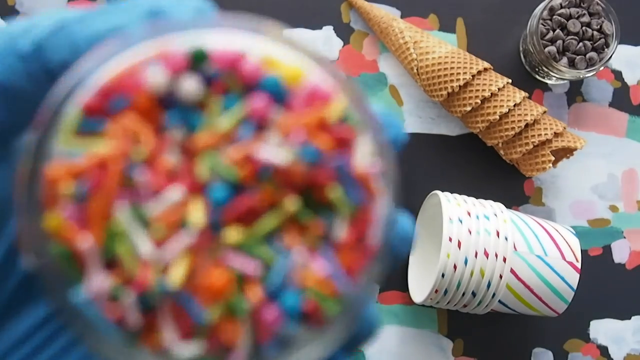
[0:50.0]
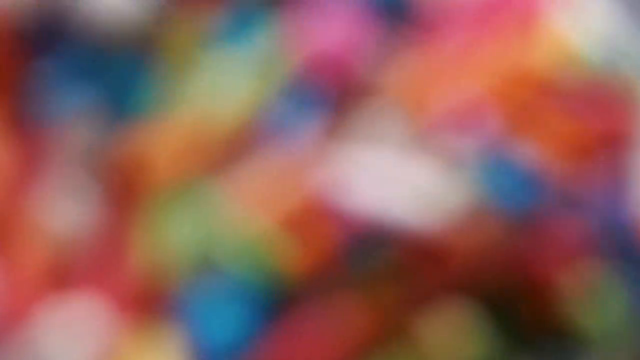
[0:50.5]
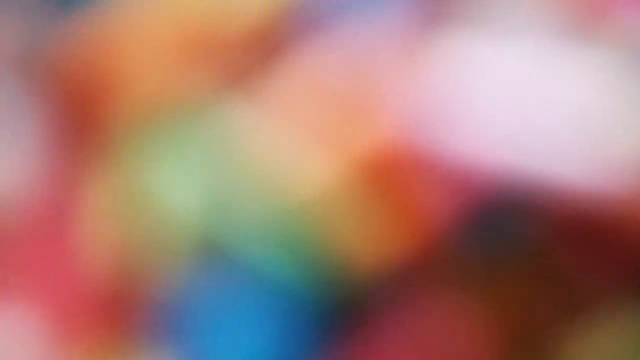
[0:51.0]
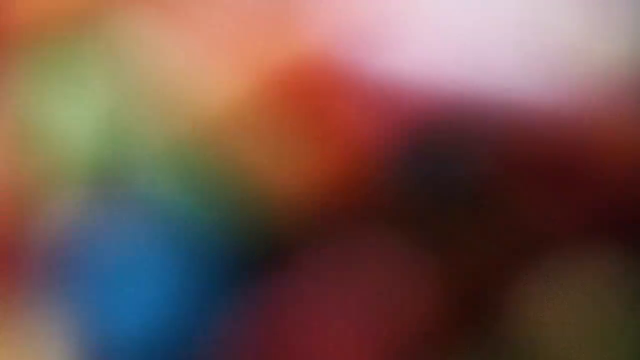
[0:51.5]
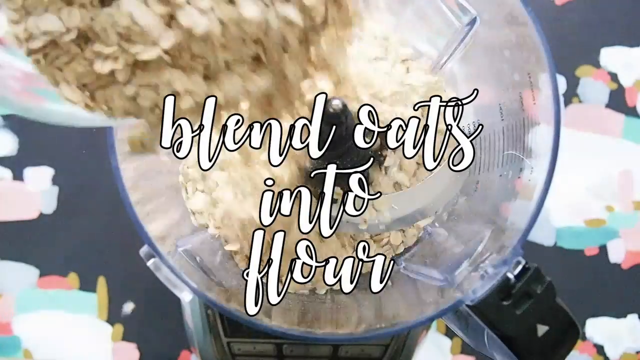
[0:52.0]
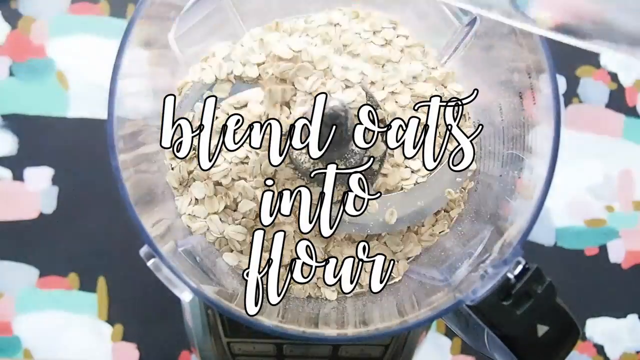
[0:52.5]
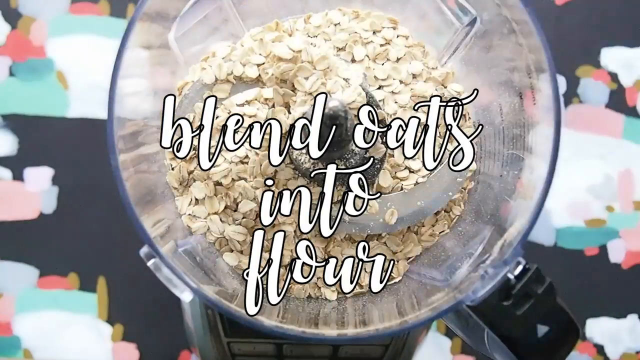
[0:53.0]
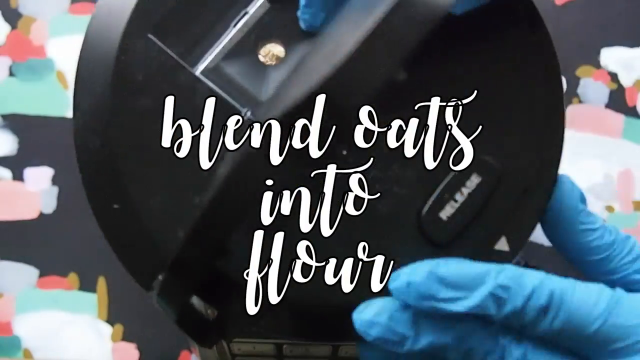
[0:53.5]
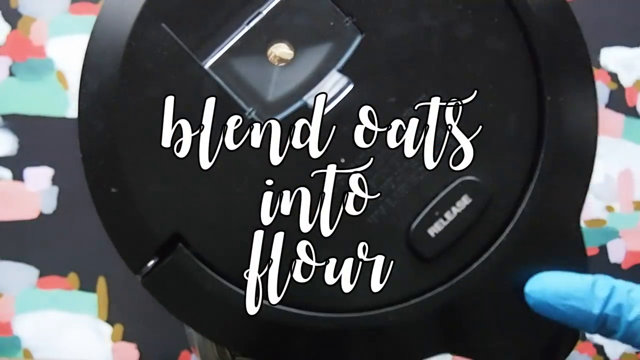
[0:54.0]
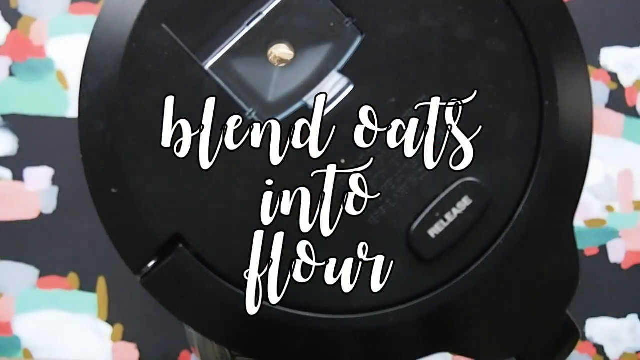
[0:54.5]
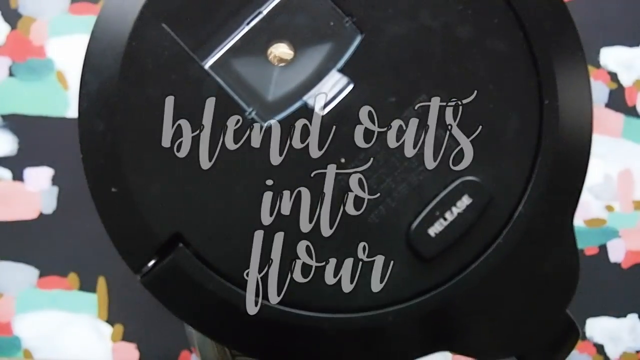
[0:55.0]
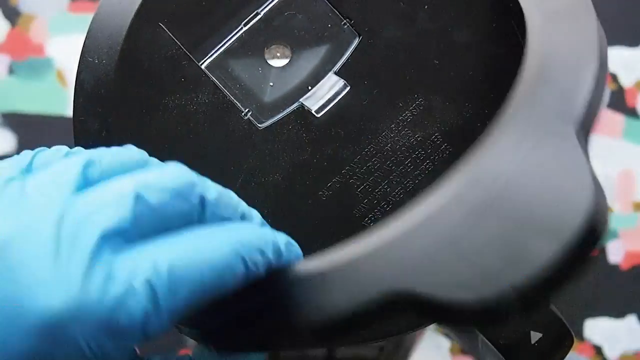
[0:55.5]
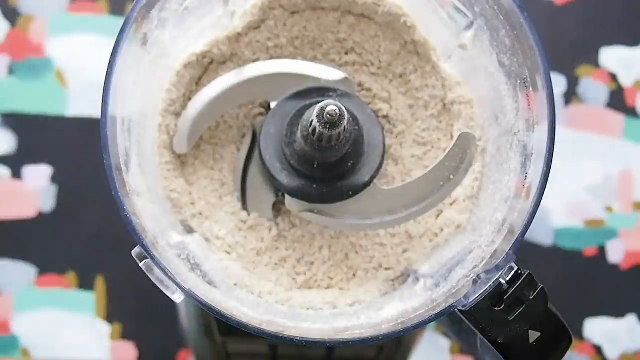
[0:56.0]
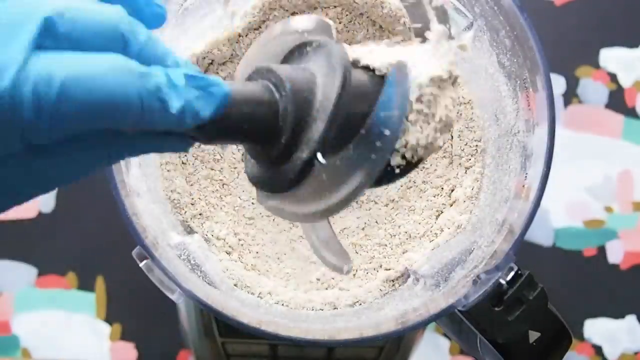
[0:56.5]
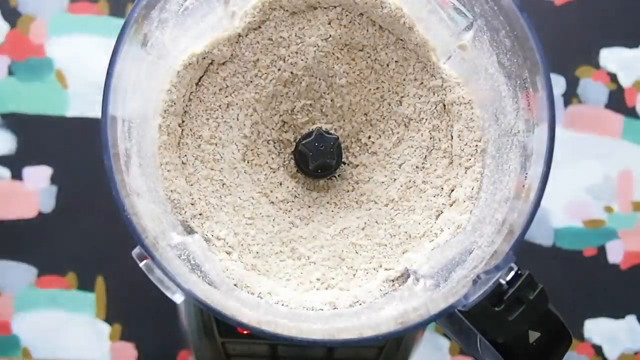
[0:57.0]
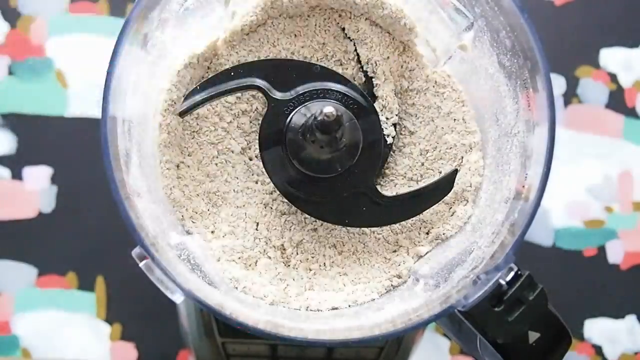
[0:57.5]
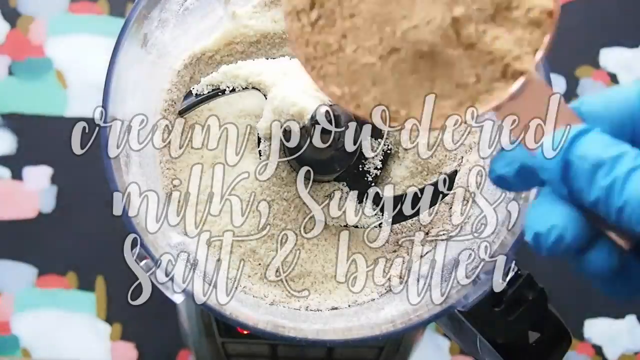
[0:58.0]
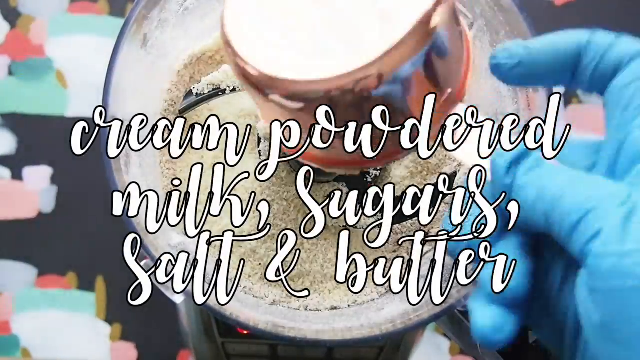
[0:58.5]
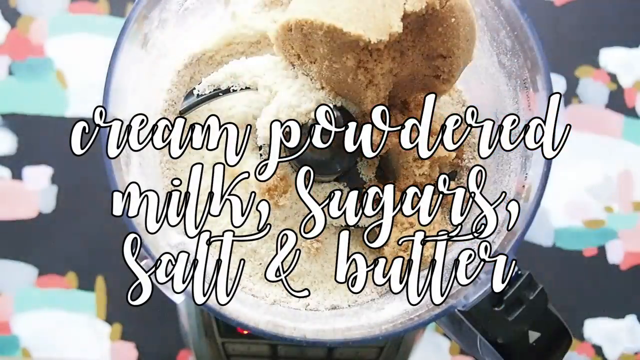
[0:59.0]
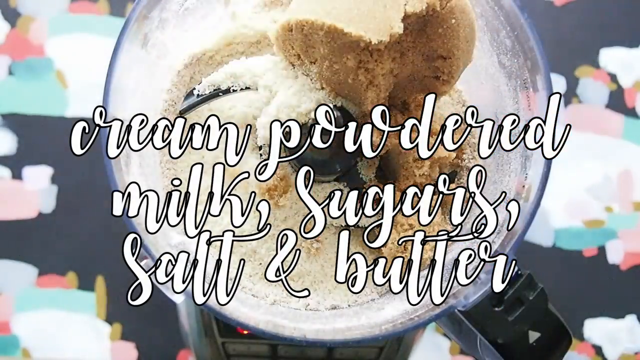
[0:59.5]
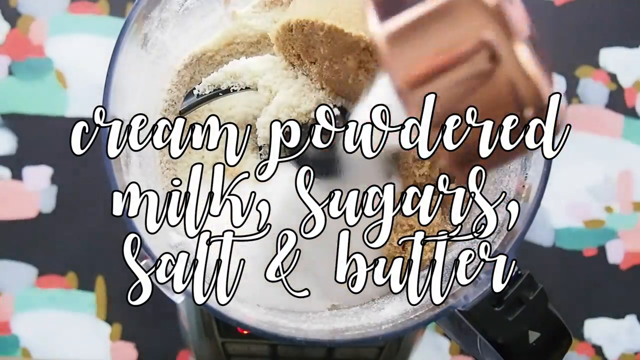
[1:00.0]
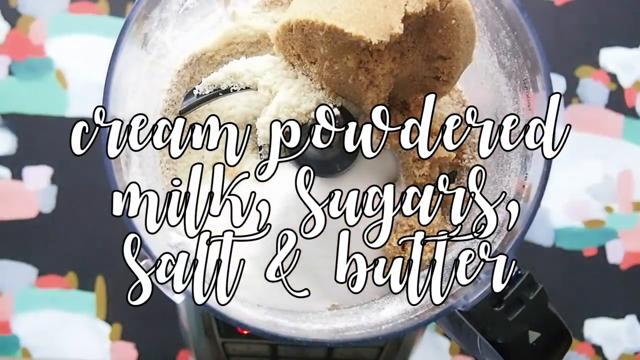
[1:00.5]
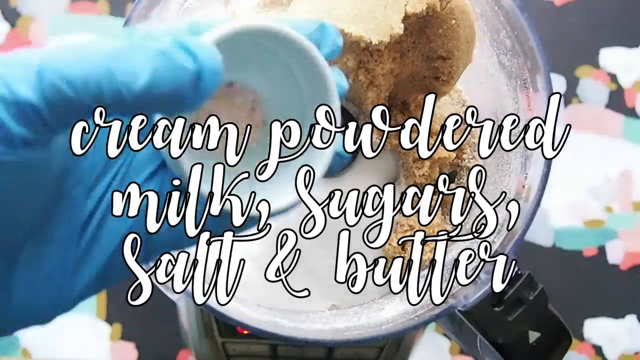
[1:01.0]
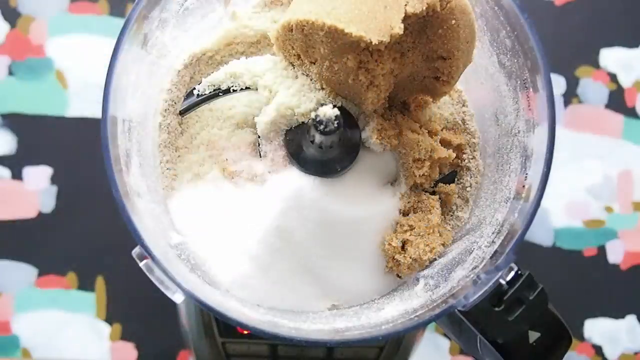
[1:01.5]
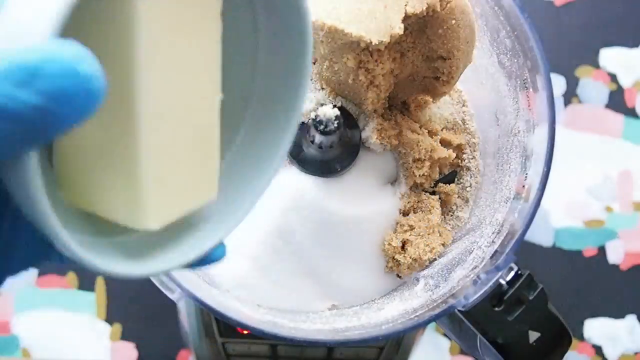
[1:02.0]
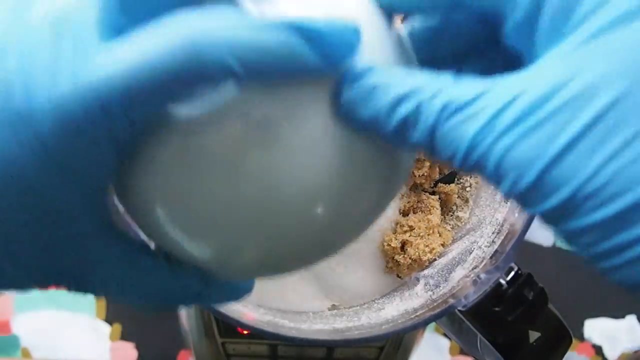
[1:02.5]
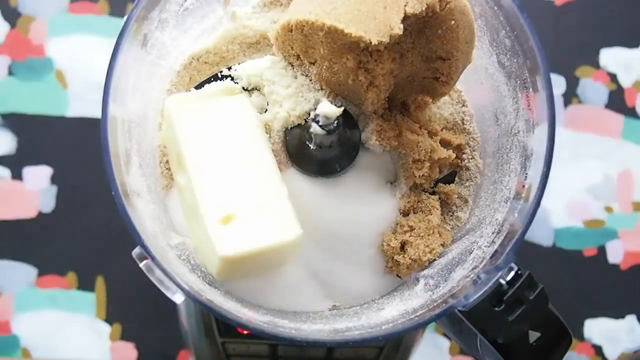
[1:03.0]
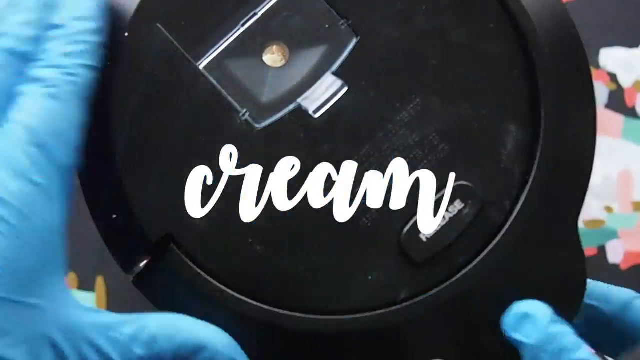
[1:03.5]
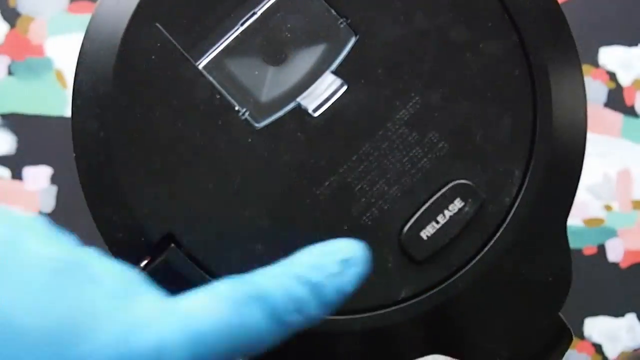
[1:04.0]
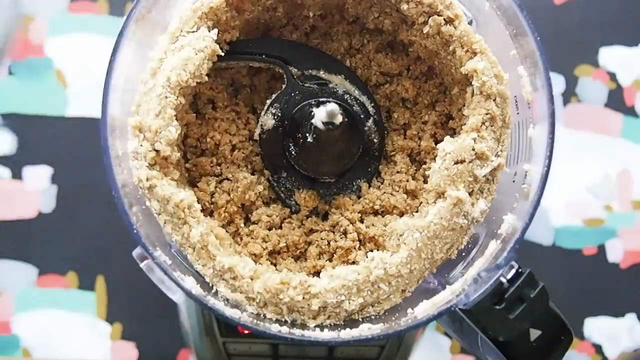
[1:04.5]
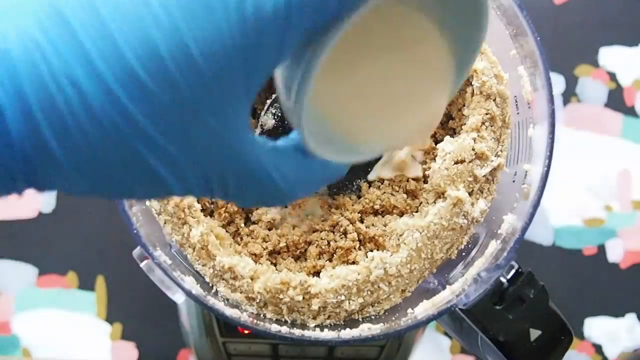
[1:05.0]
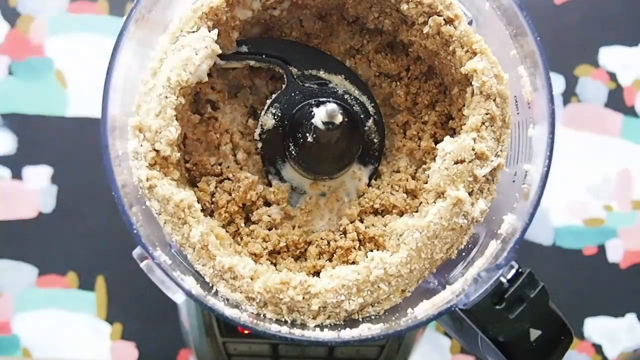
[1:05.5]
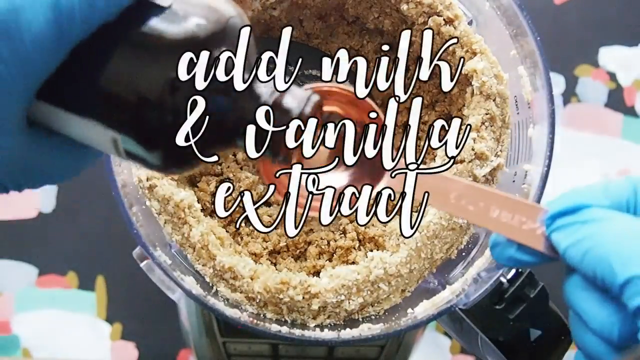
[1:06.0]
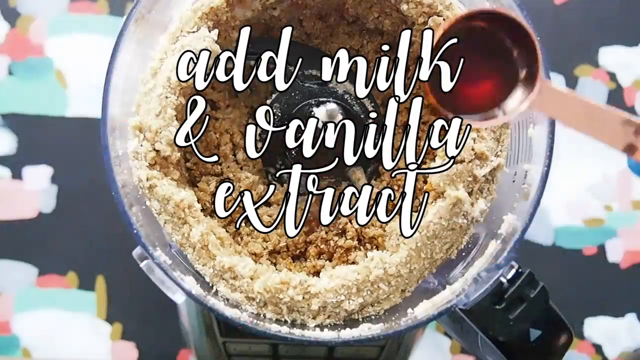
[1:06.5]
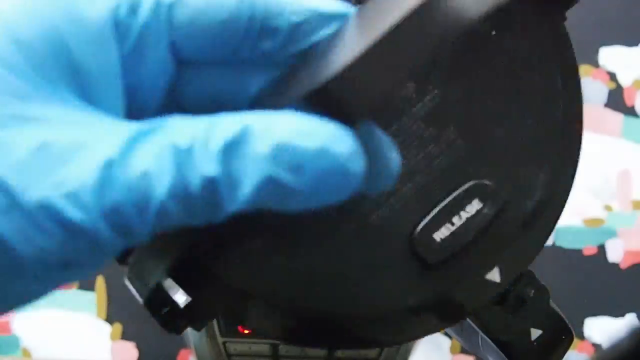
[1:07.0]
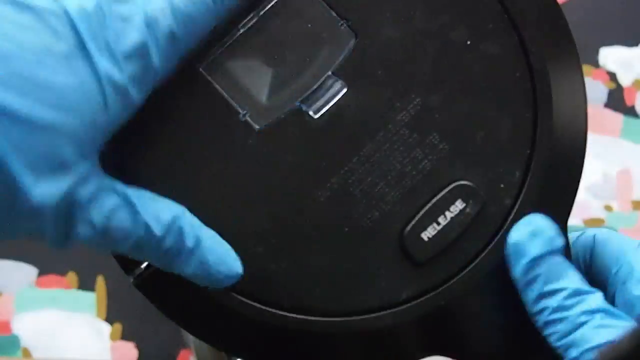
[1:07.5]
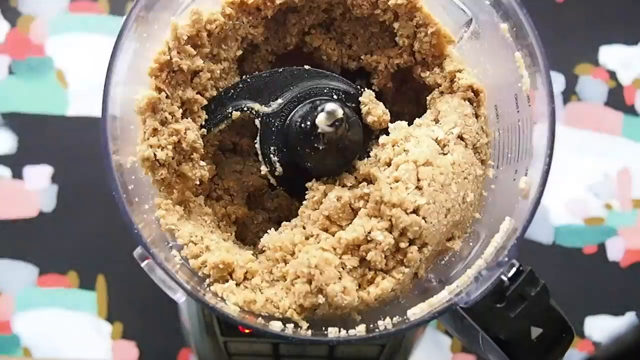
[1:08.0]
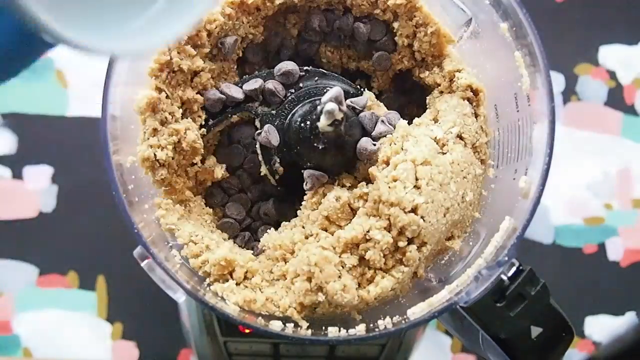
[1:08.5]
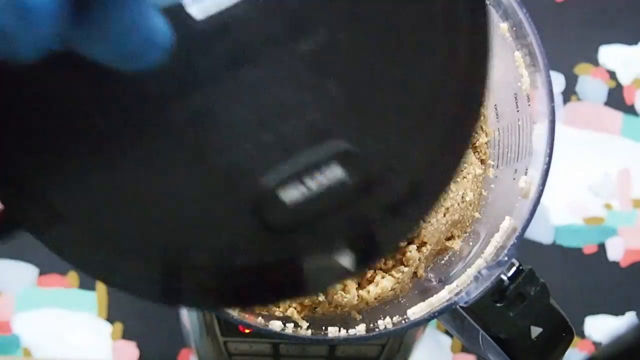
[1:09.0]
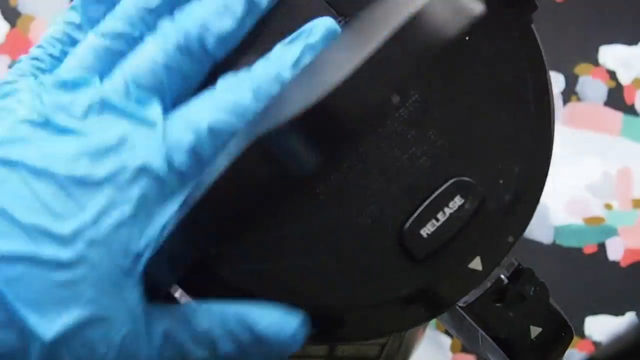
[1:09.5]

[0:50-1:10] The items needed are shown: plastic cups, cones, sprinkles and treats. The person wearing blue gloves takes a bowl full of treats and sprinkles and shows it to the camera. The scene changes to text reading "blend oats into flour"; oats are placed in a blender and blended until they look like flour. Powdered milk, sugars, salt and butter are put into the blender and blended, then milk and vanilla extract are added and blended. The remaining ingredients are added and everything is blended in the blender.